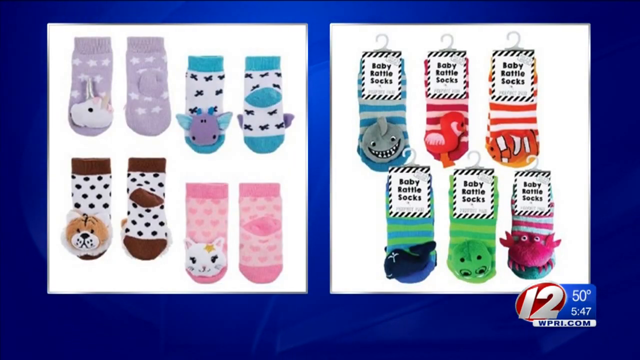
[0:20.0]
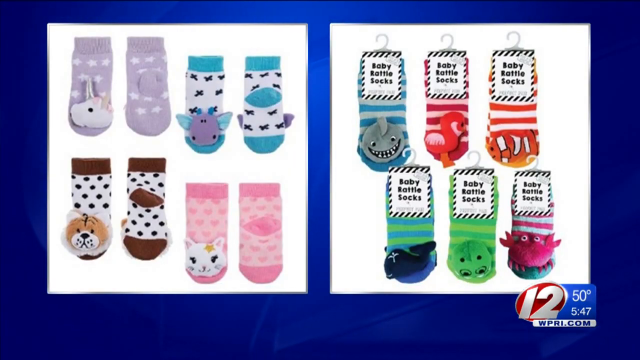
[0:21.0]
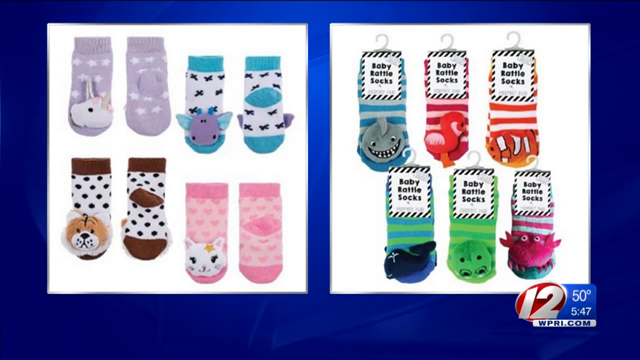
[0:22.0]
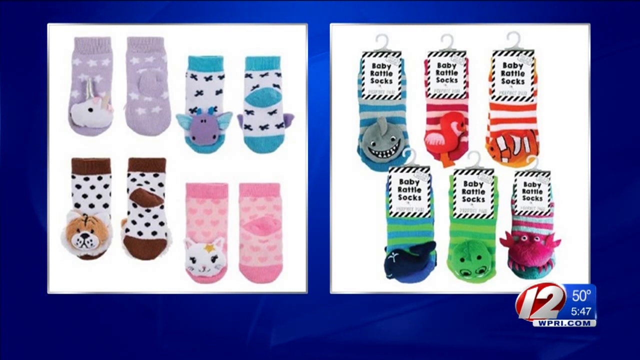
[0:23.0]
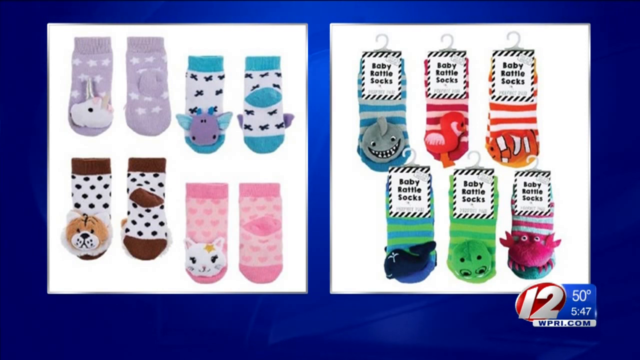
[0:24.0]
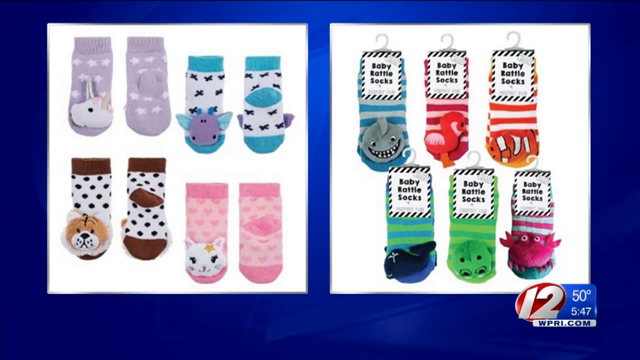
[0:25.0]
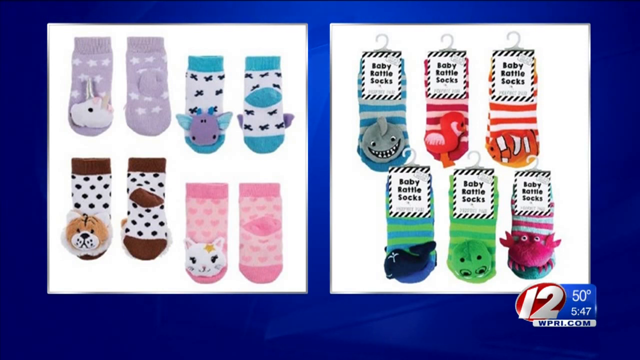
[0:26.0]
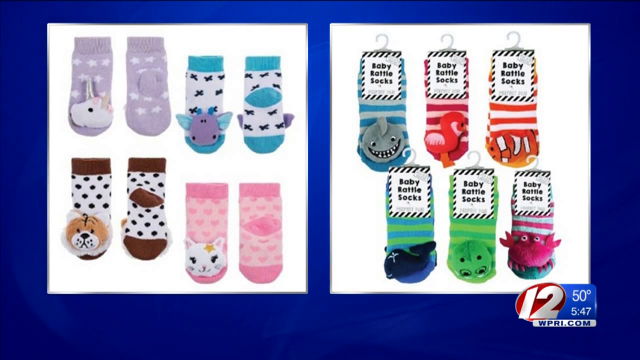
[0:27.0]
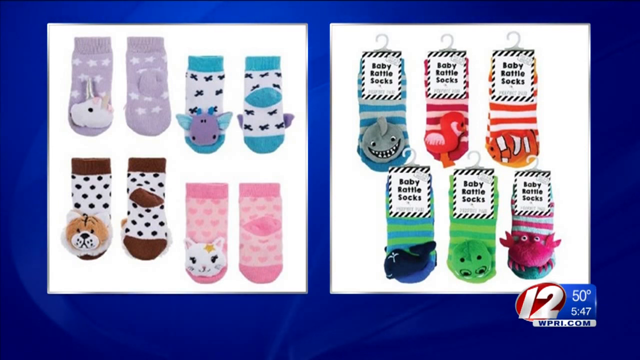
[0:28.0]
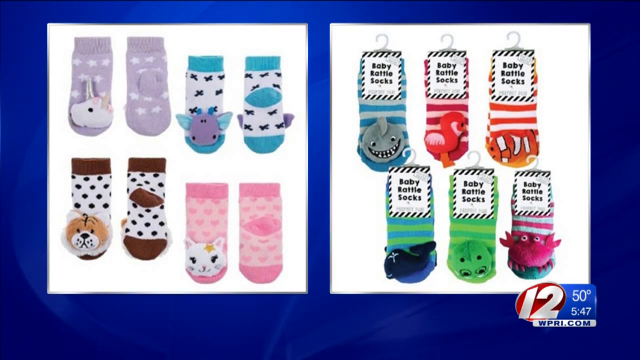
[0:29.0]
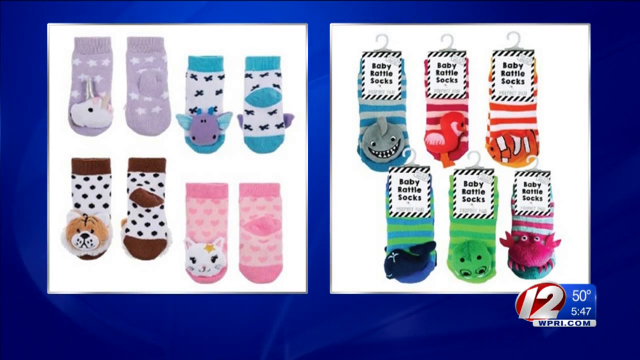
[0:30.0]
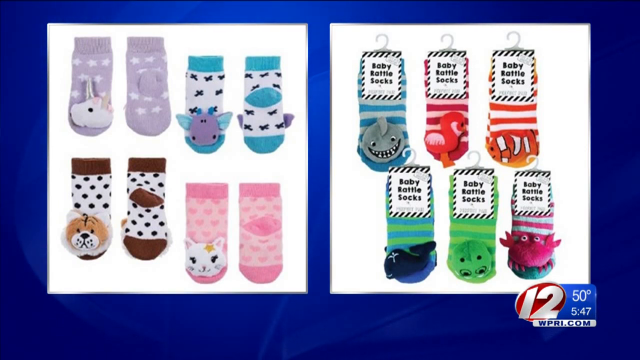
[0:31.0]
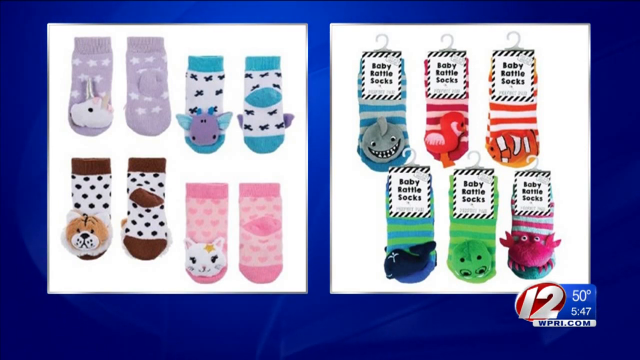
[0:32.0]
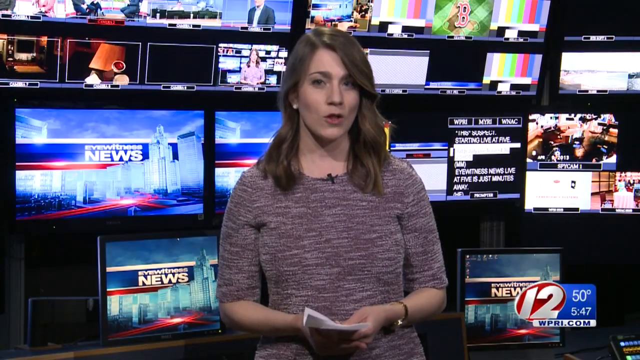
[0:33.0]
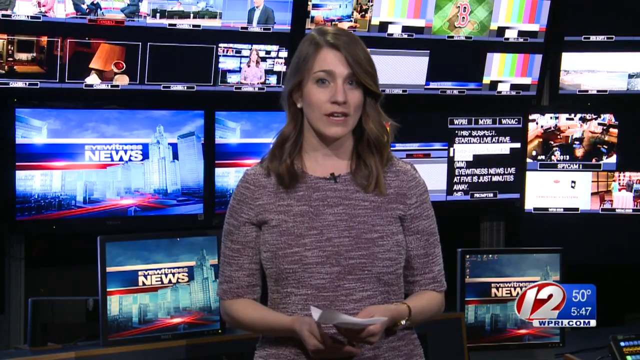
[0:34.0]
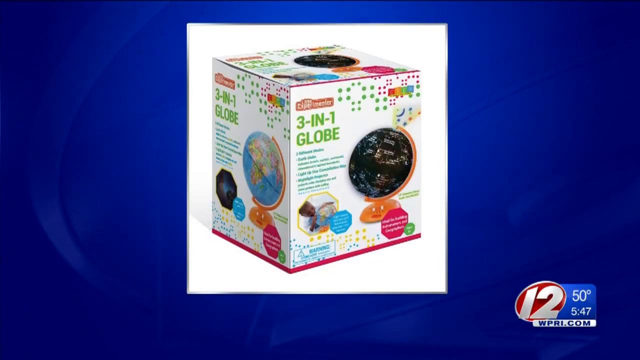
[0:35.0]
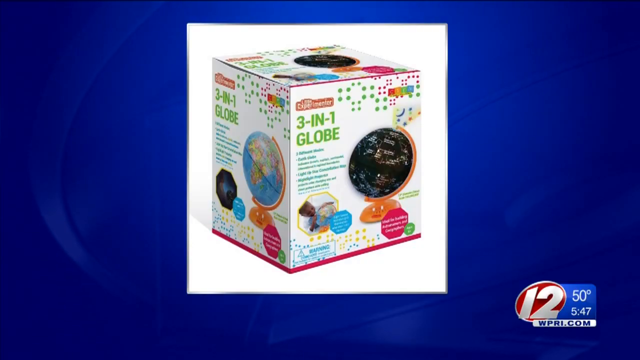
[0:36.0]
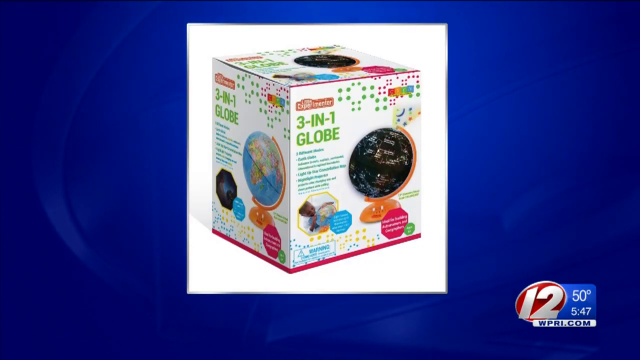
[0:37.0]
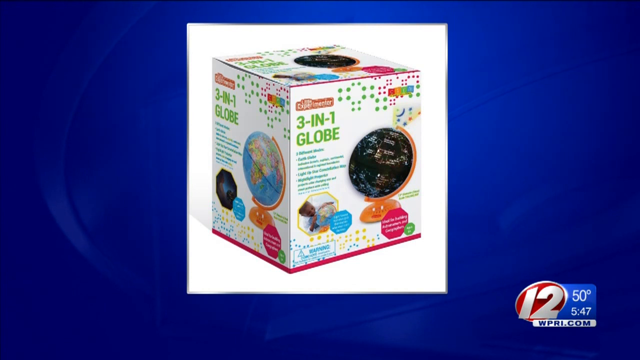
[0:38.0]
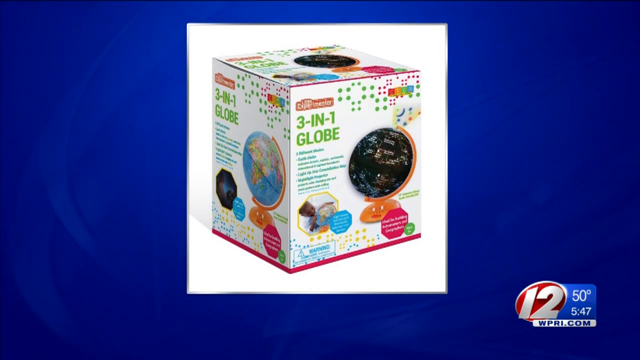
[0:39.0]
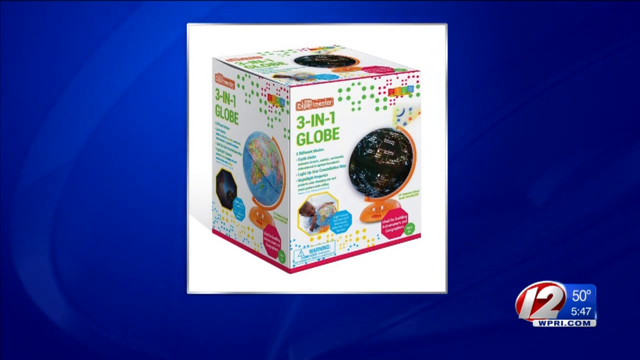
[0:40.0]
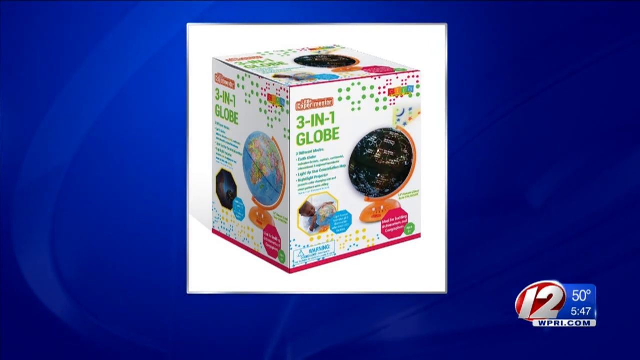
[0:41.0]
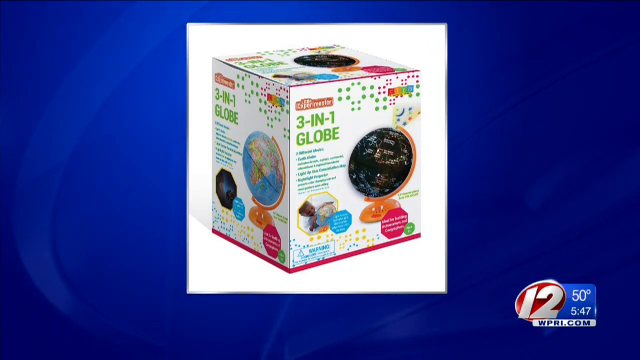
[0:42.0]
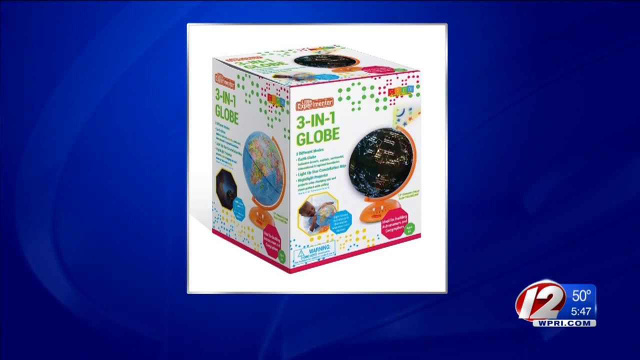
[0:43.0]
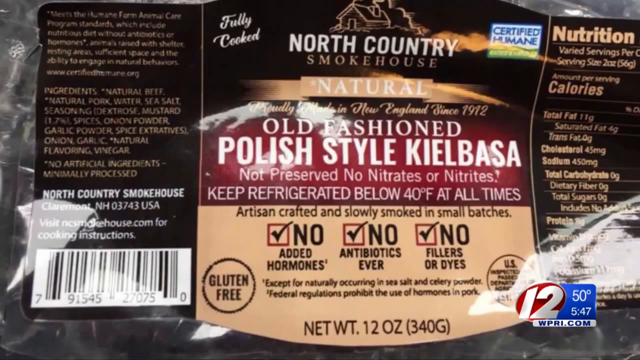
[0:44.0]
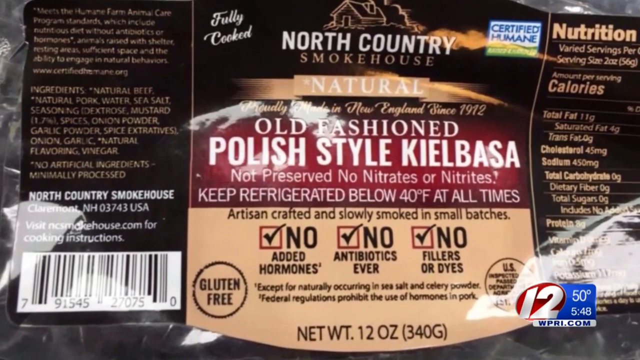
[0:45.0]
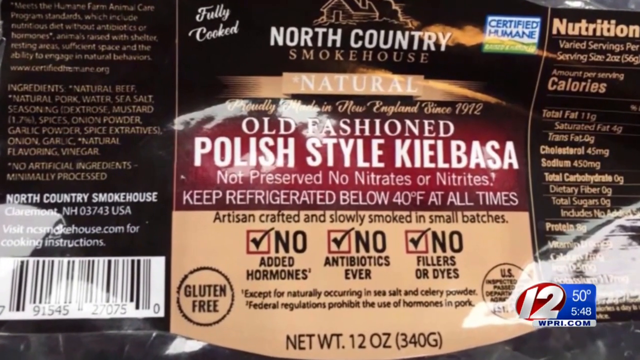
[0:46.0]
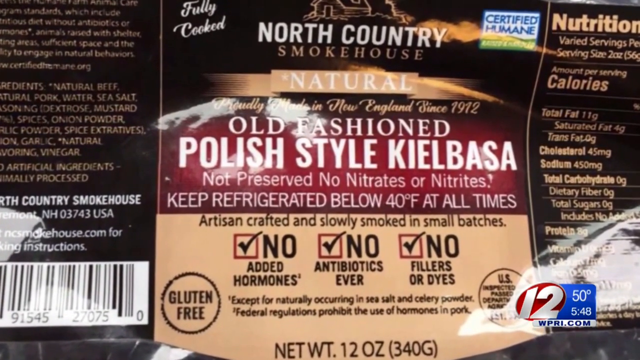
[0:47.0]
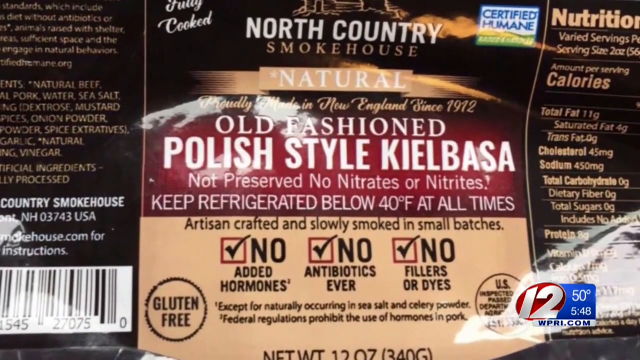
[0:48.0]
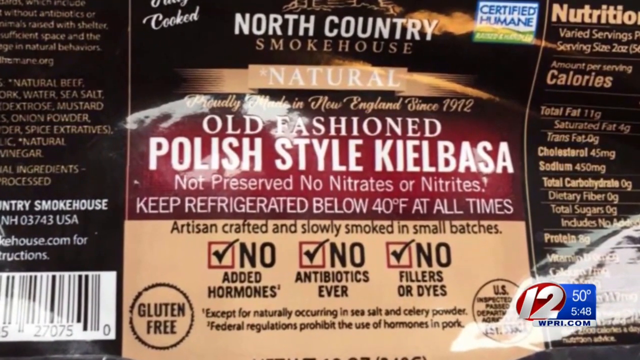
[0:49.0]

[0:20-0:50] Another news reporter, Susan Campbell, apparently the anchor for the Coverage You Can Count On segment, stands in a newsroom. Behind her are images of different screens, all showing something related to the Eyewitness News. She is in her mid-40s to early 50s, wears a sweater with a round neckline, and stands in profile to the viewer. She reports on socks, and the image switches to ten children's socks. The playful socks are purple, green, brown, pink, red and blue, some striped, and they have characters on them, such as sharks, flamingos and other fun animals.